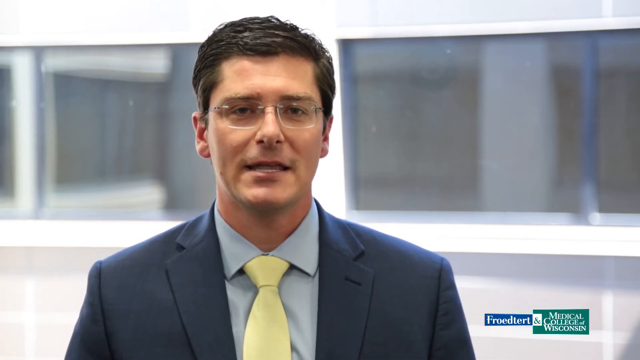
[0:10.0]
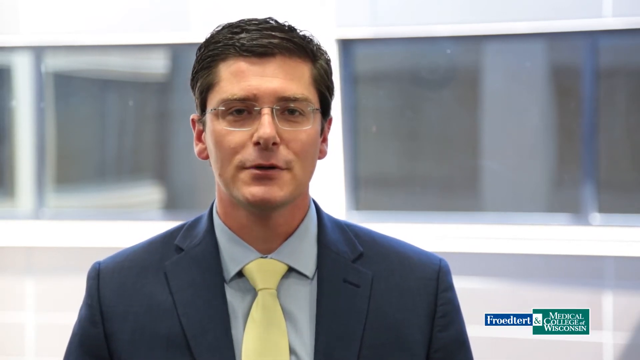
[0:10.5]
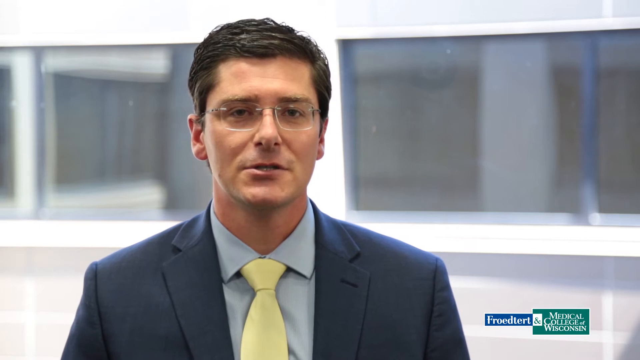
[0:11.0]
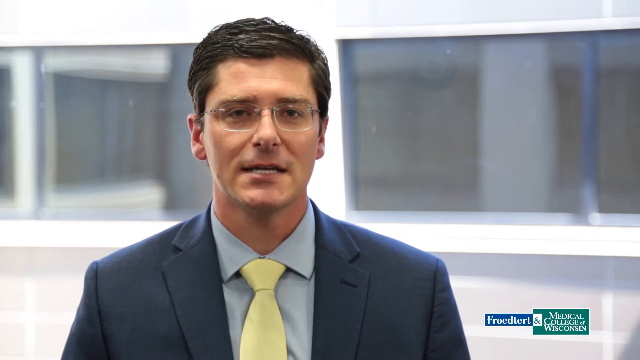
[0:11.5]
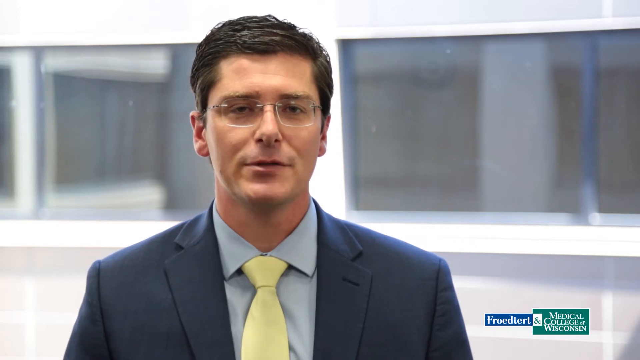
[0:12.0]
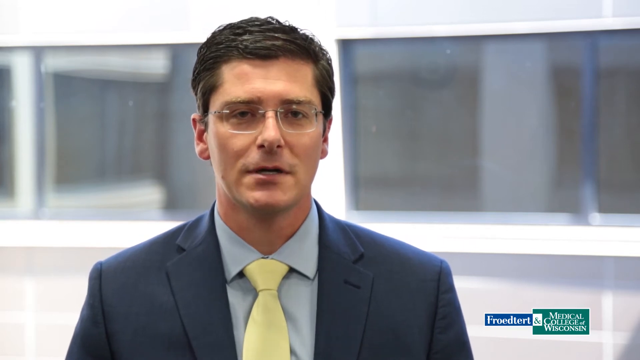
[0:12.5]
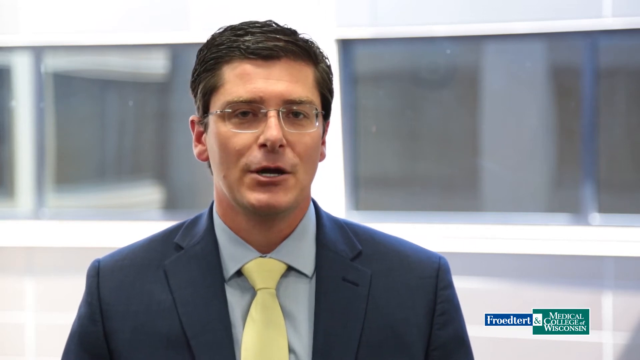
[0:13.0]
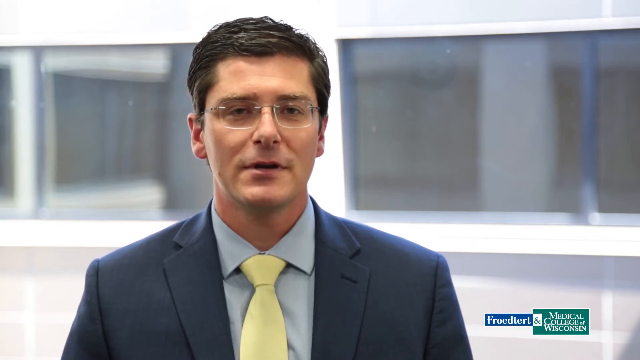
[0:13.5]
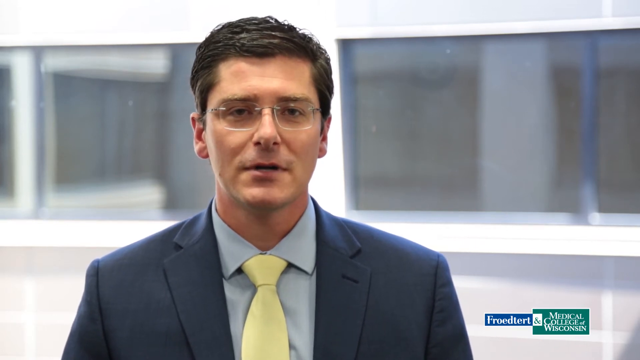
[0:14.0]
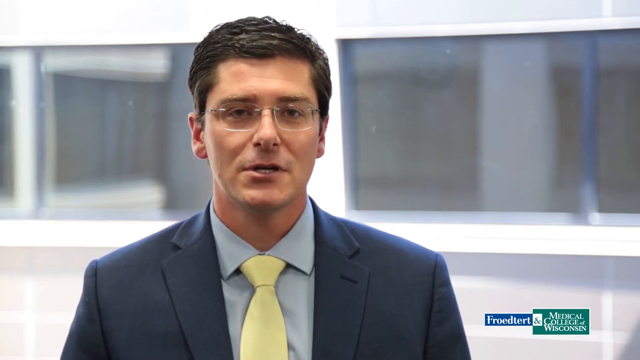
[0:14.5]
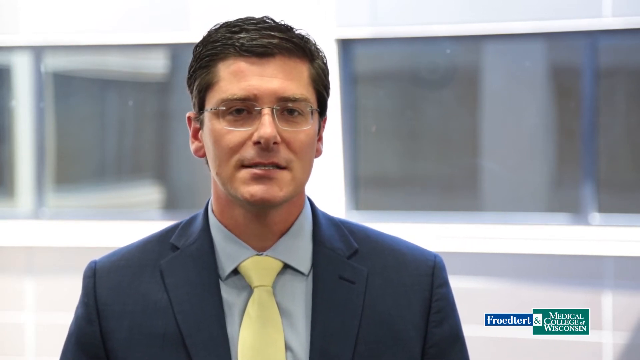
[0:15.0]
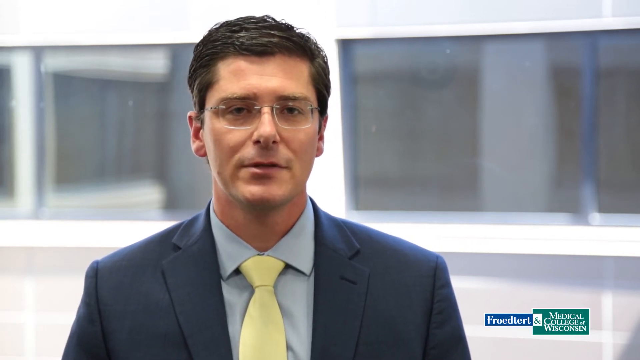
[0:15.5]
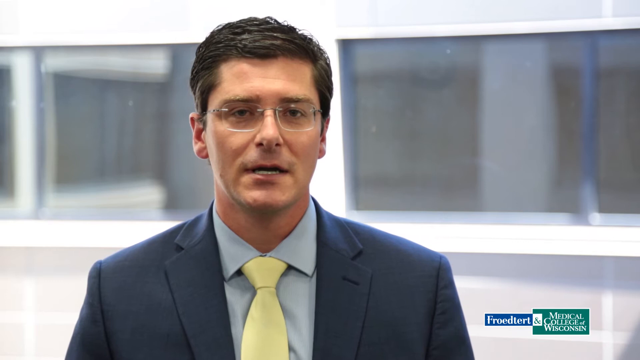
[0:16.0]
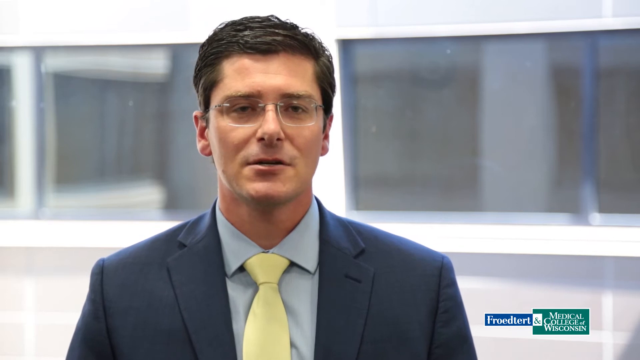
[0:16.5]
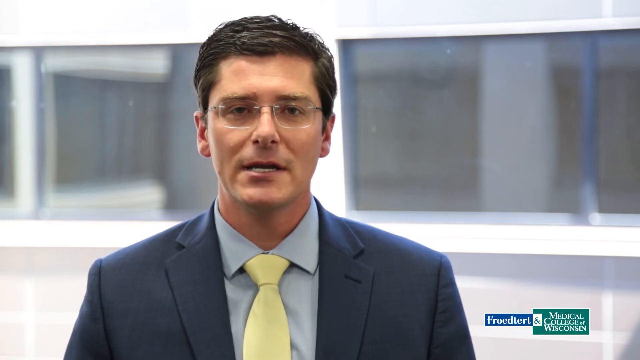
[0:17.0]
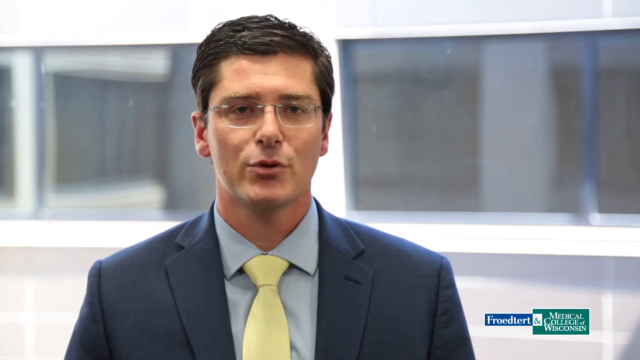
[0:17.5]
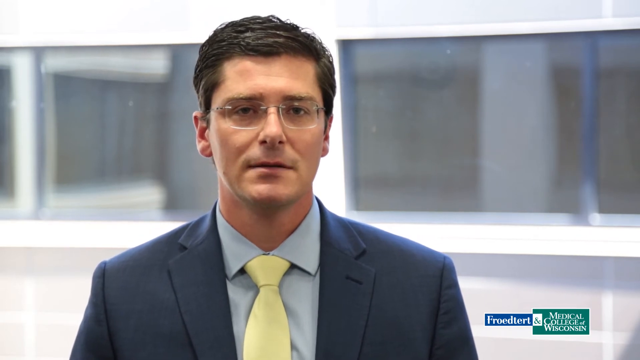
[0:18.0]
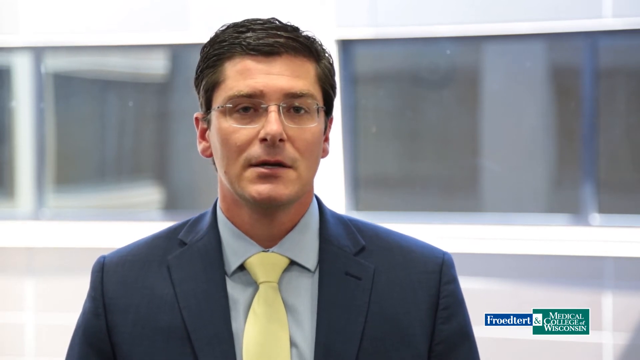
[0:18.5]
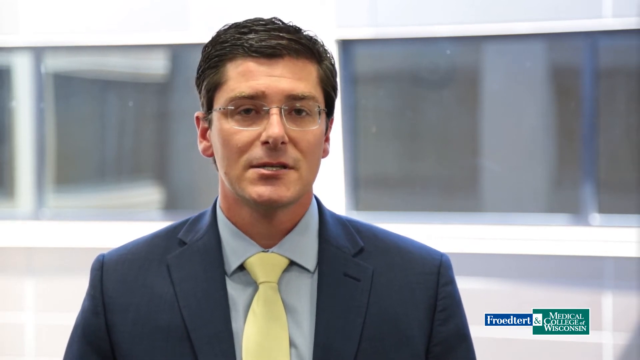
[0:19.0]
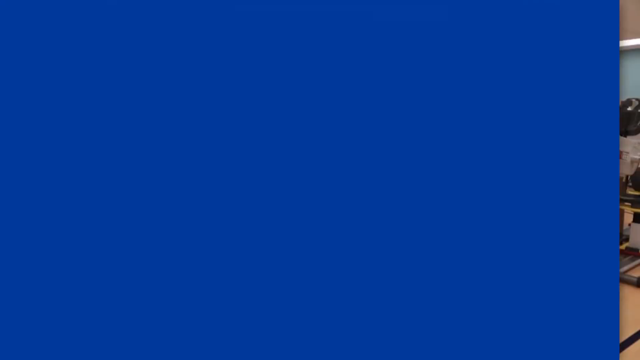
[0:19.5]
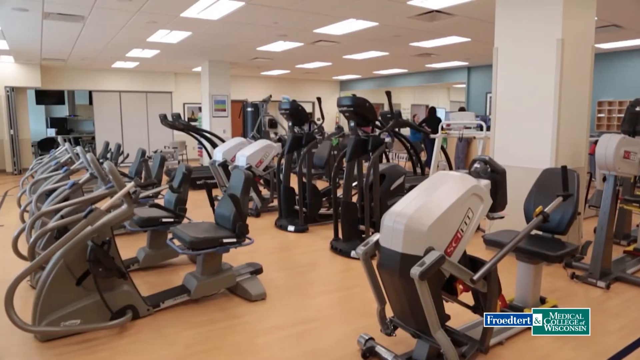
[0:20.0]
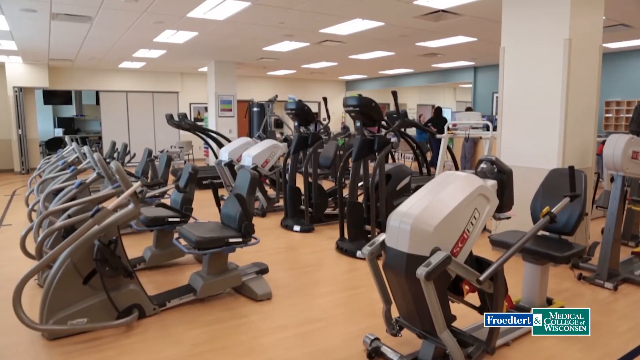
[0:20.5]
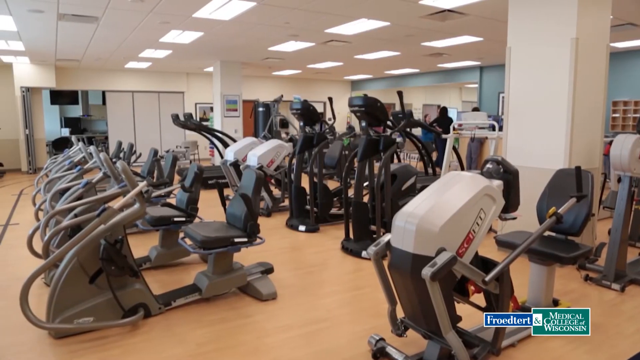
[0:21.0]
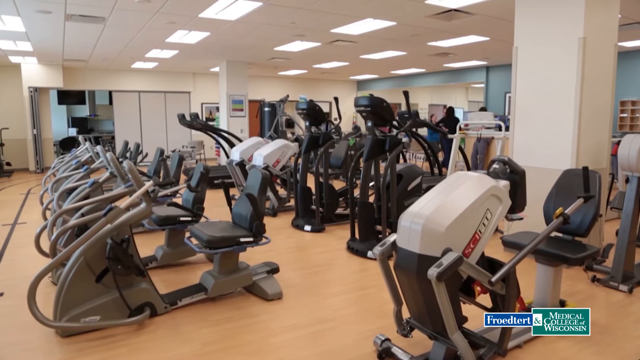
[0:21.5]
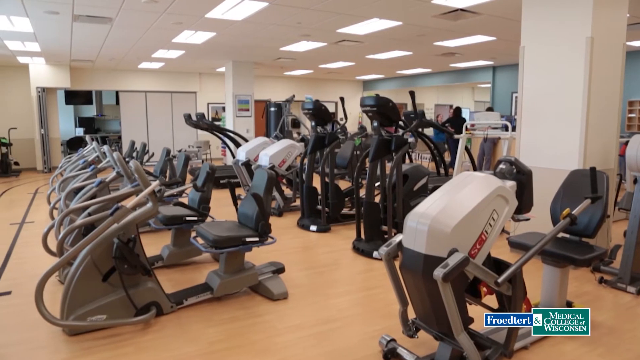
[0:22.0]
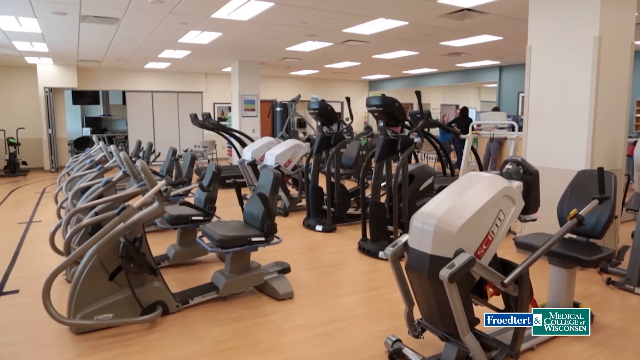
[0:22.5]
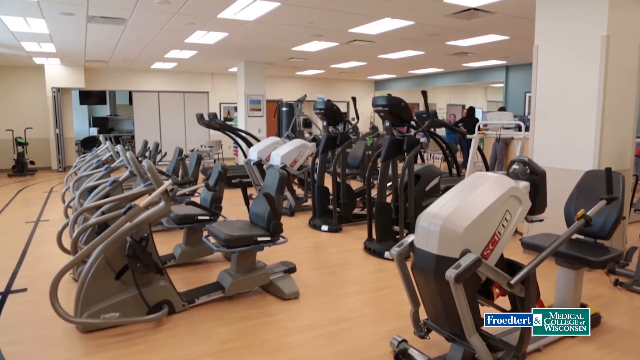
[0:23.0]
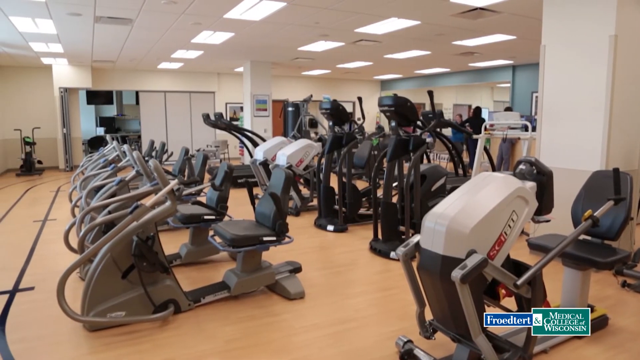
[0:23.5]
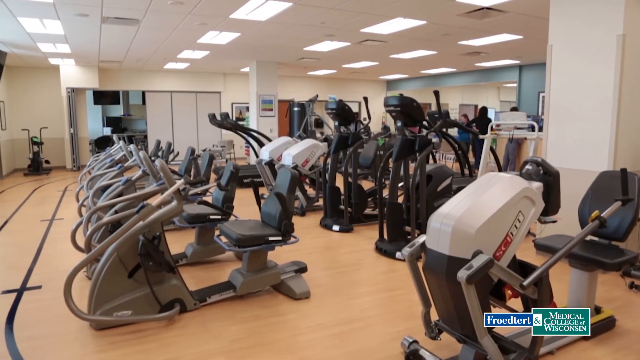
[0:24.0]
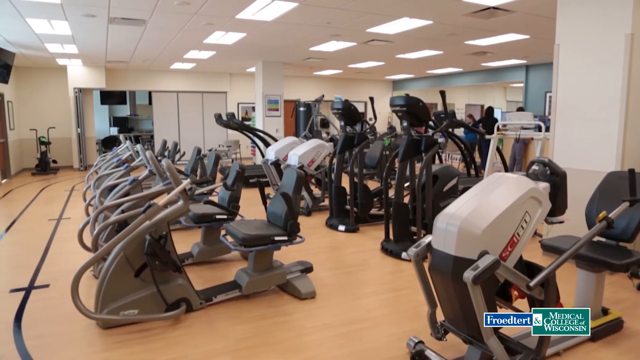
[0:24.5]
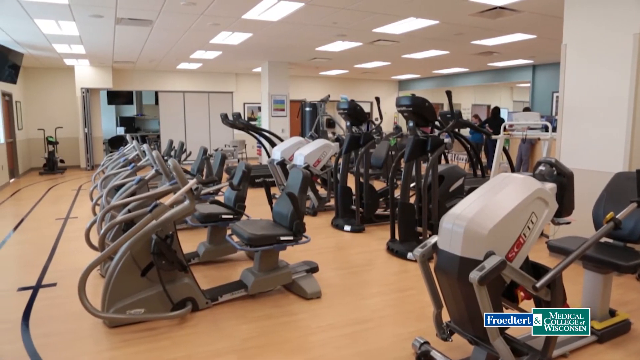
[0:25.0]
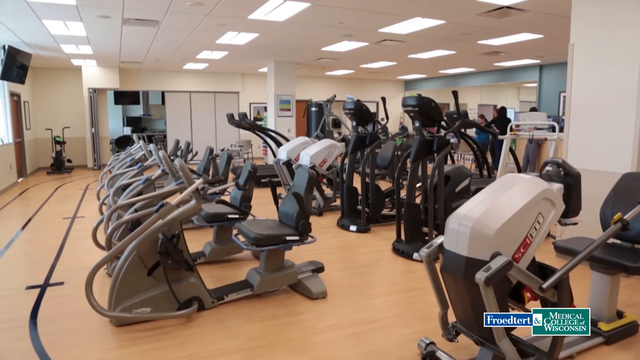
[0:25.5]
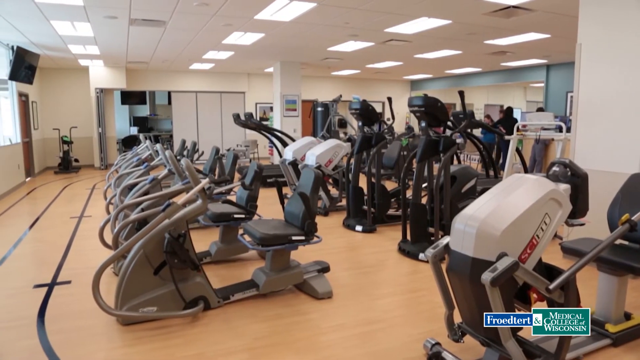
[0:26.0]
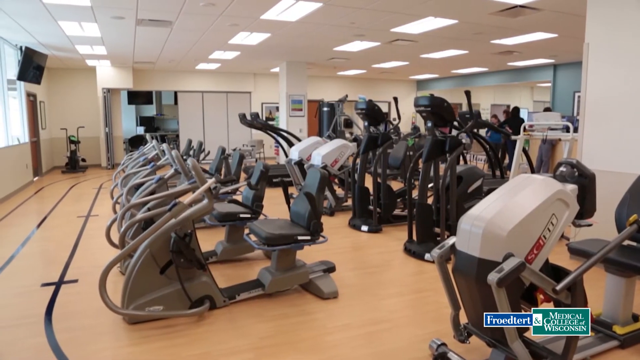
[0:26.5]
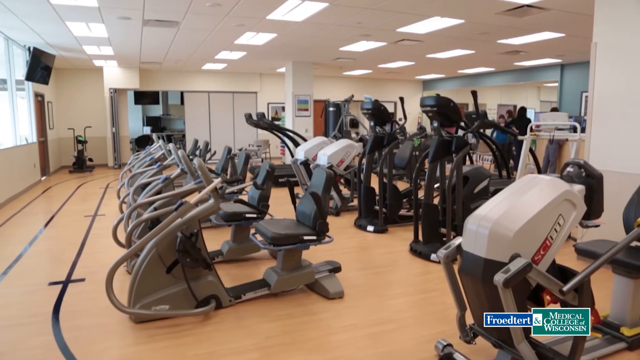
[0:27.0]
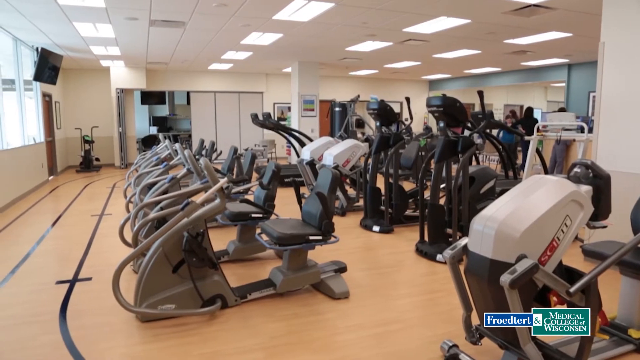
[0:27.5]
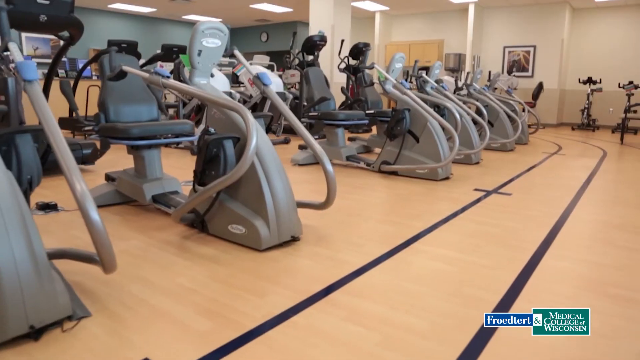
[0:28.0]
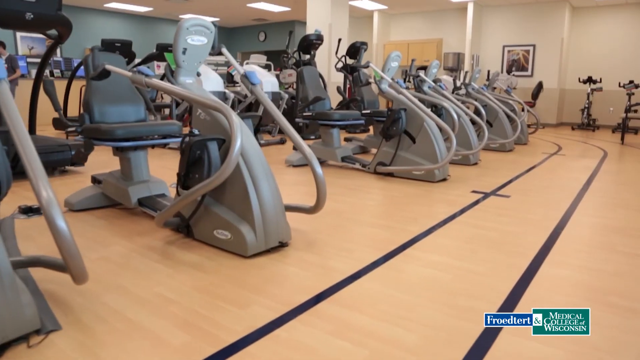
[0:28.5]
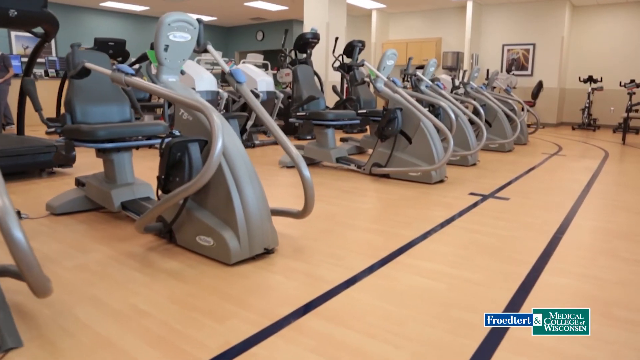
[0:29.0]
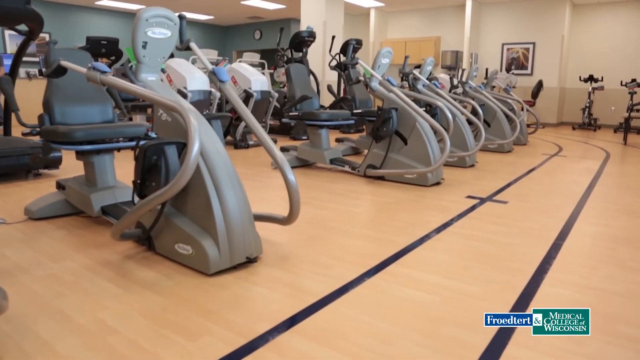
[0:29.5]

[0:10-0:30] The man is in an interview, or at least in front of some sort of building with dark tinted windows. As he continues to speak, the video cuts to a gym in a community-type center with large flush lights. There appear to be 25 or so exercise machines, with an open room to the left where a television, the partial side of a desk, and what appear to be white privacy screens are visible. In the background are the fire escape and a red door that looks to lead back to the restrooms. The camera pans to the right, revealing another opening, possibly the commons area, and a wall painted light blue with a little artwork and some shelving or cubby holes along the back wall.